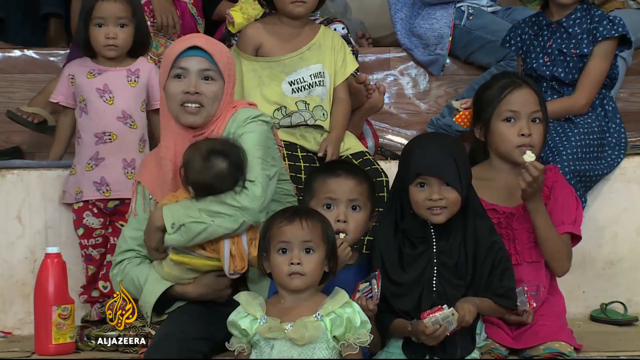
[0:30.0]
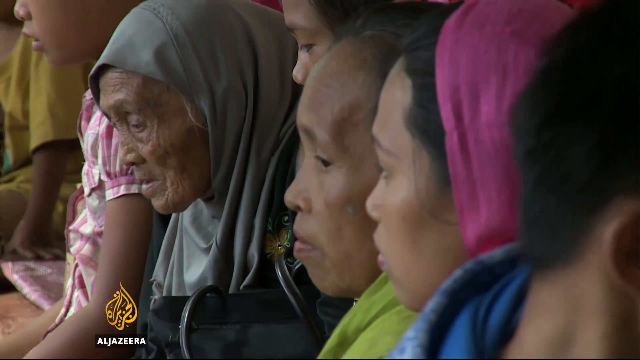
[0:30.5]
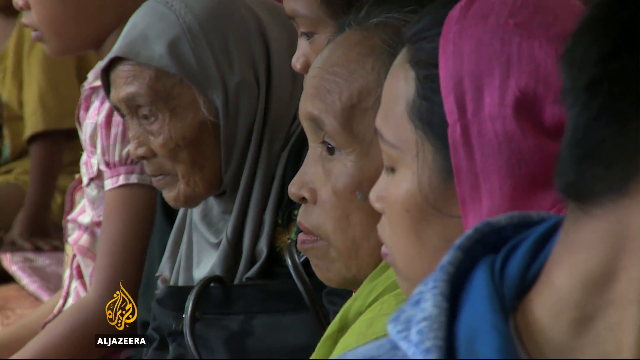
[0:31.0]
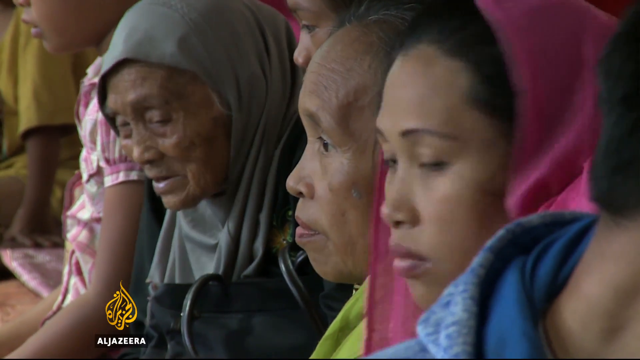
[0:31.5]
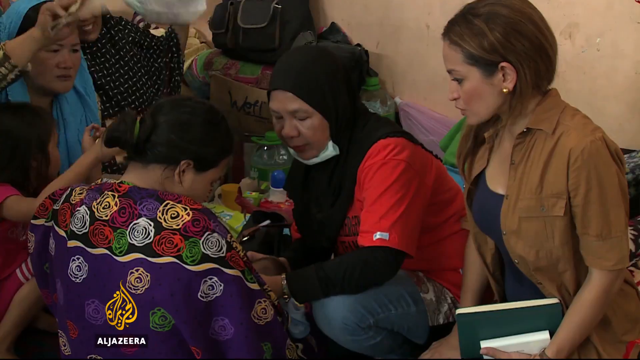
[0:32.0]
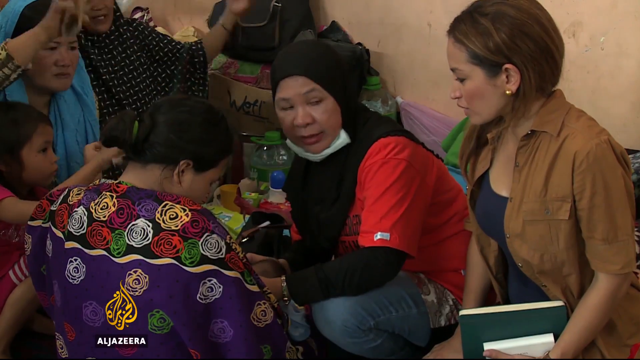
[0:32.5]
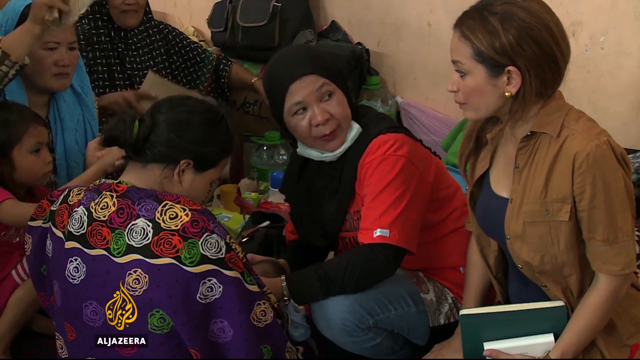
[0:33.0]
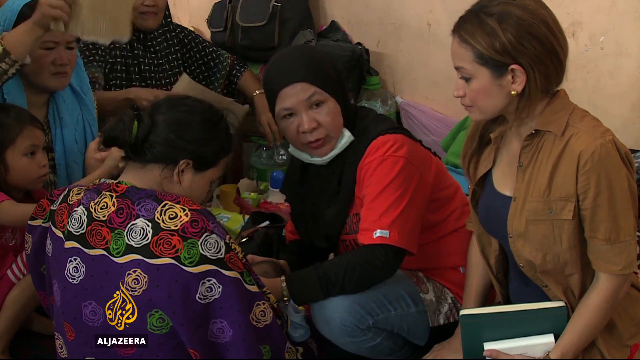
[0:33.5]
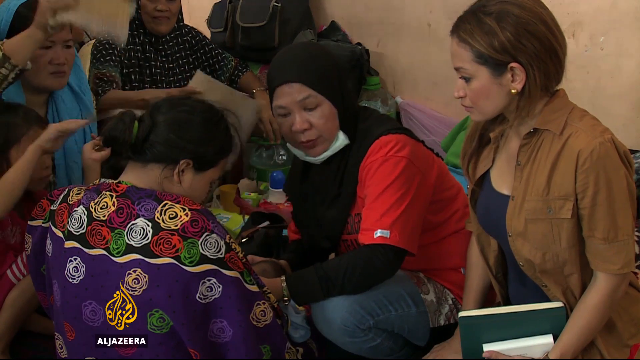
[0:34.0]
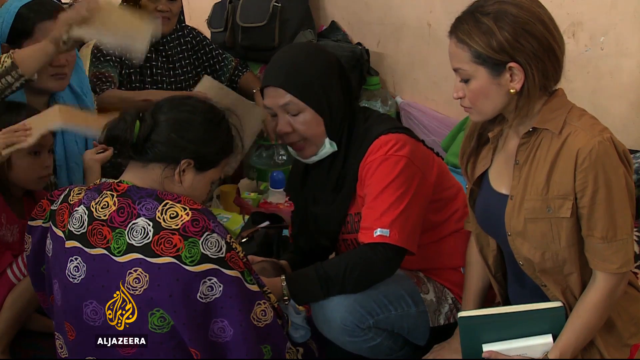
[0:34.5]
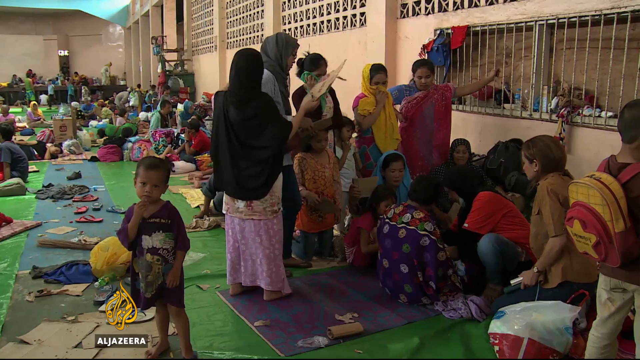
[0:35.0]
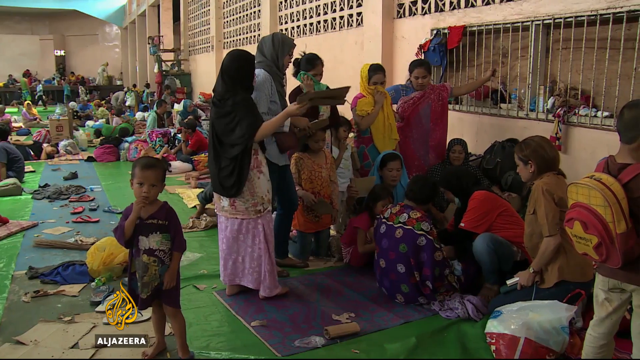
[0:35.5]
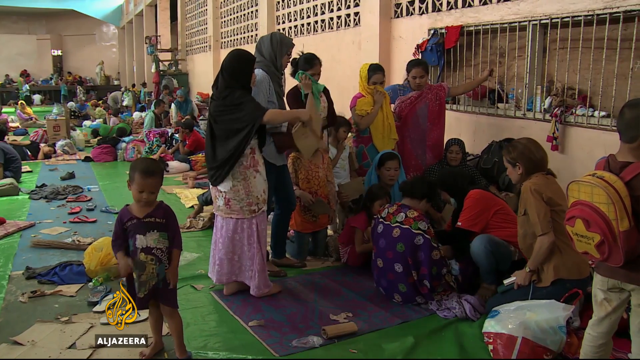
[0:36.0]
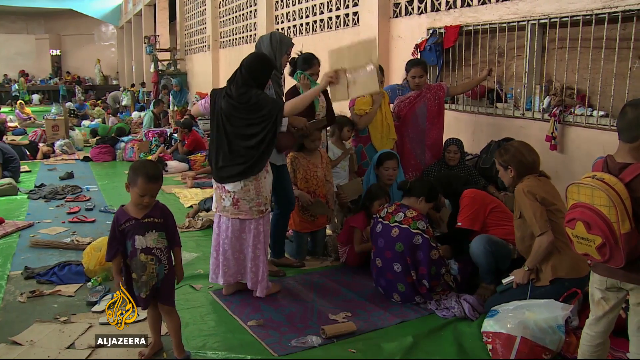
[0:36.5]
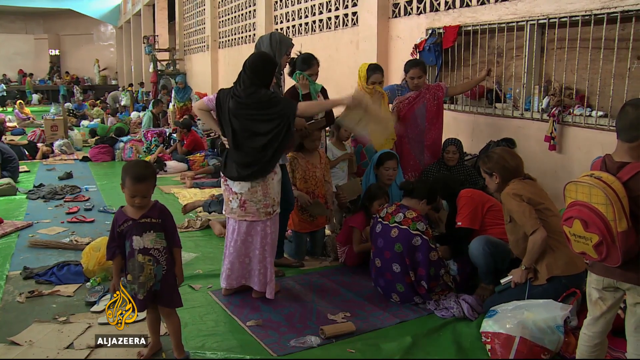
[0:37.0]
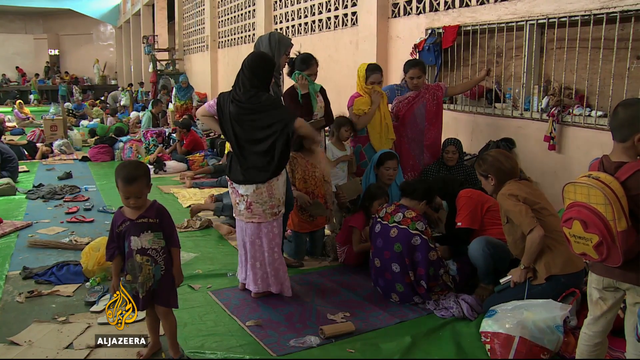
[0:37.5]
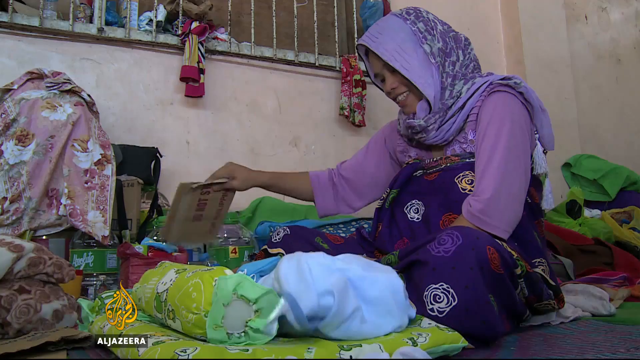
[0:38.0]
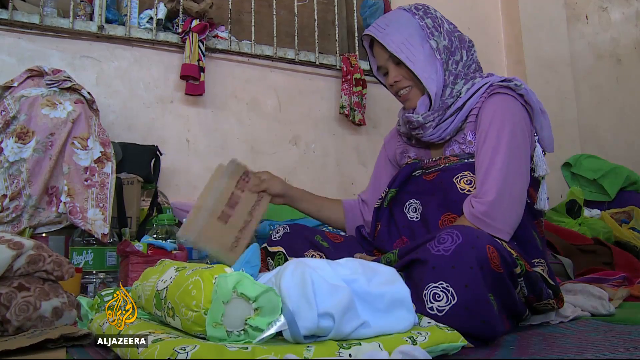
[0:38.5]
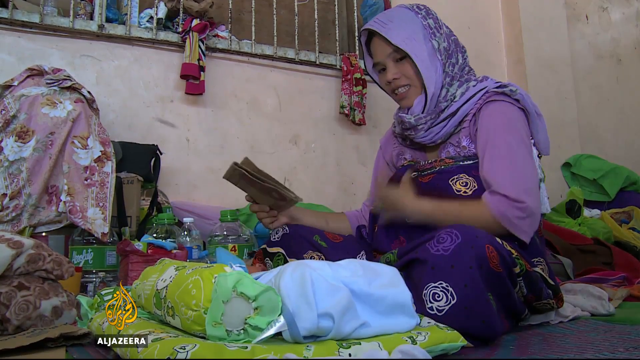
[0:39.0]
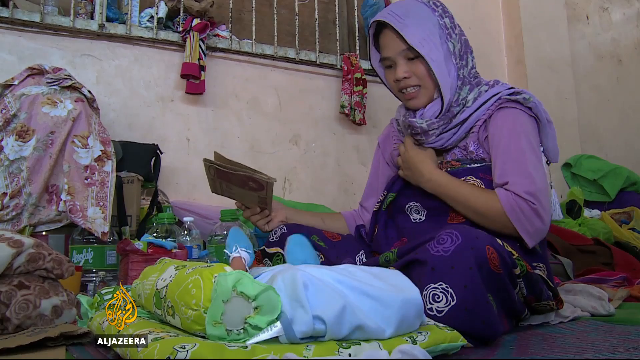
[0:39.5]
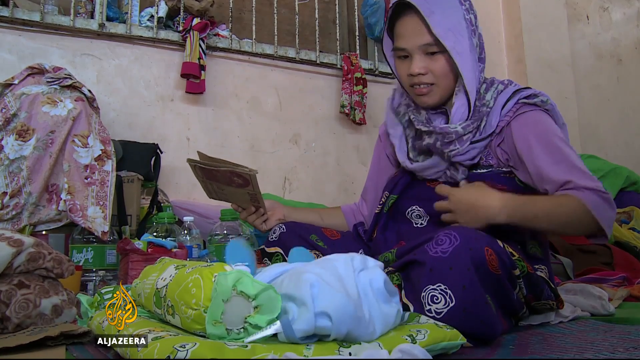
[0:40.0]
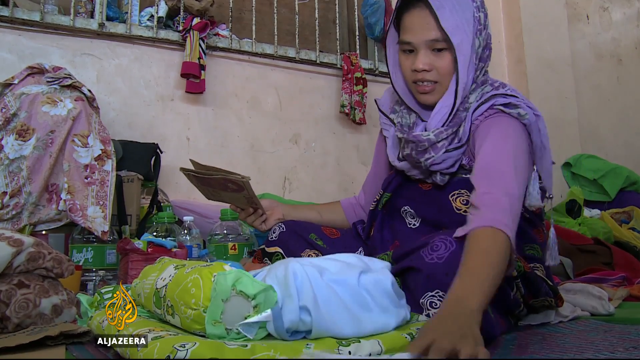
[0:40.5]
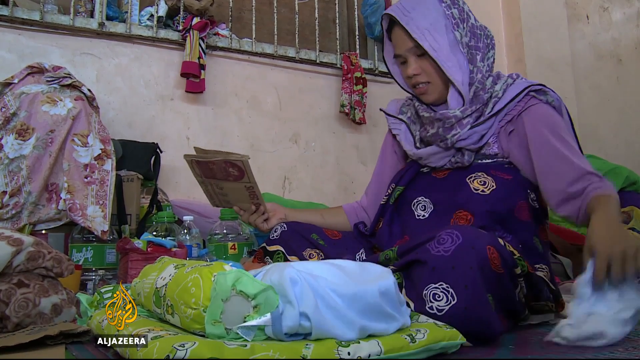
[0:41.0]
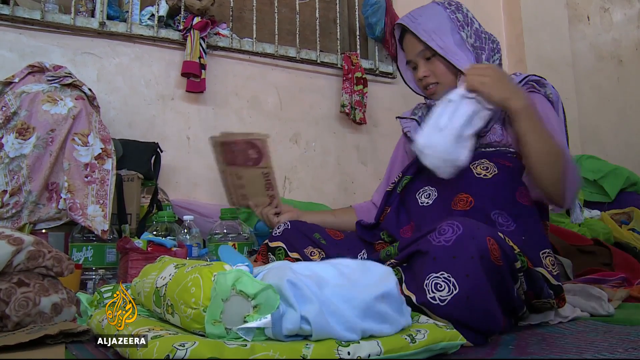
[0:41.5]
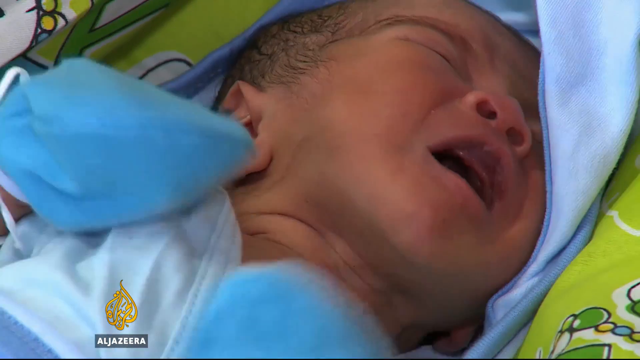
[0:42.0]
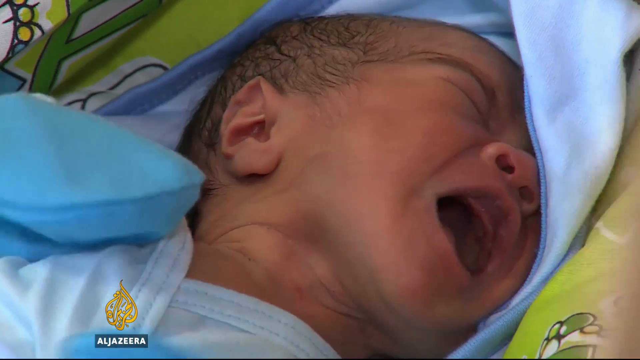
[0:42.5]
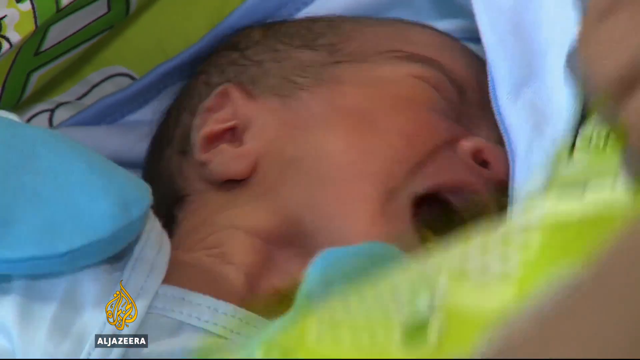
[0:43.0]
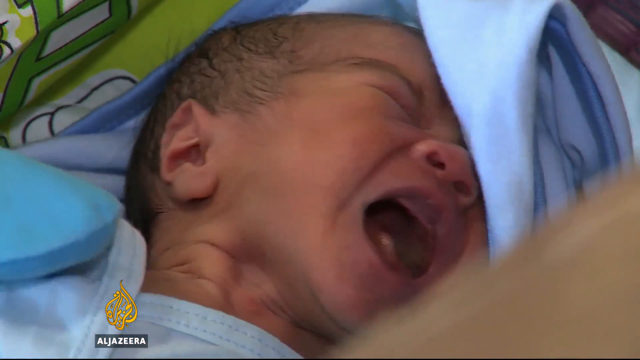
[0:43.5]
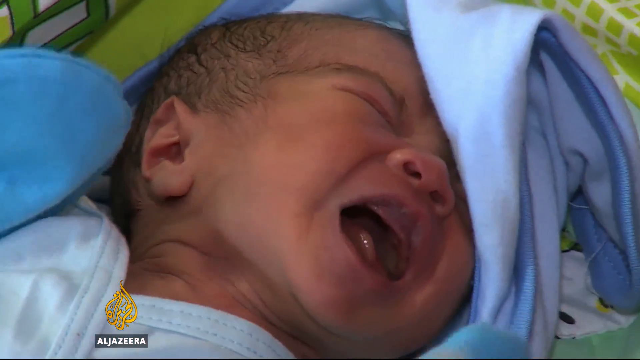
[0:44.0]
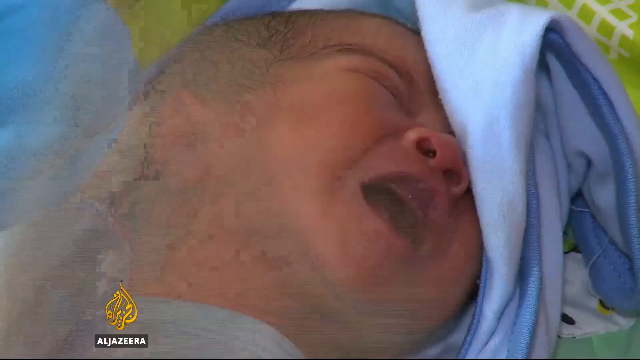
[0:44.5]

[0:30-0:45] The street scenes continue, possibly in a covered area of the street. There are lots of women and children, mothers and grandmothers, and what looks like a reporter who is not wearing a headscarf and looks more Western. She appears to be speaking to some of the mothers, who are kneeling. Women fan their children and new babies; what looks like a newborn is crying. There are some boys but no men in these shots.